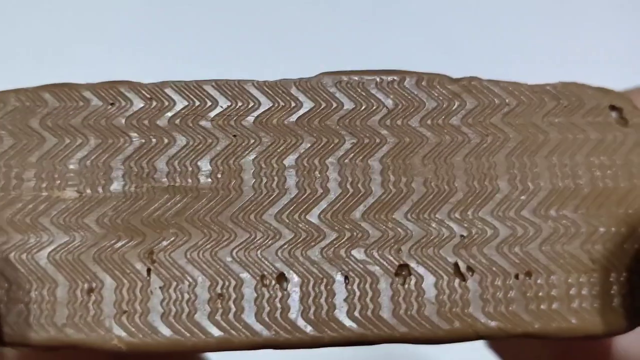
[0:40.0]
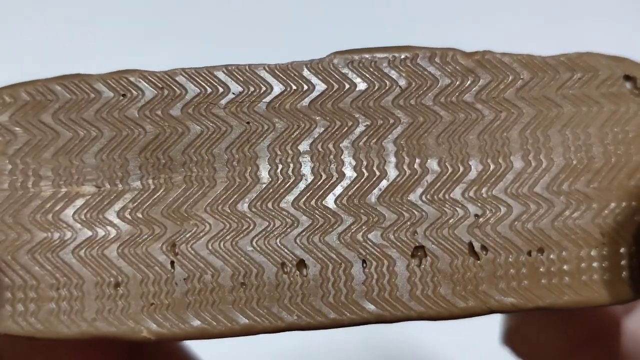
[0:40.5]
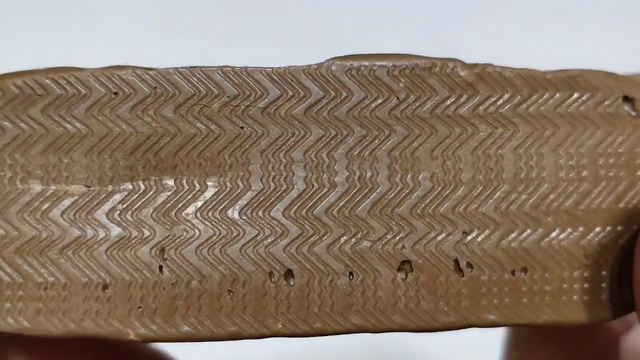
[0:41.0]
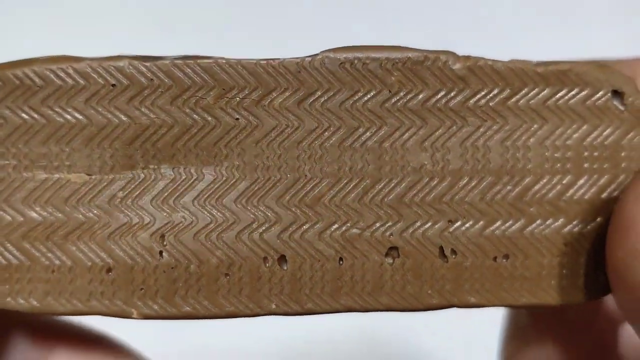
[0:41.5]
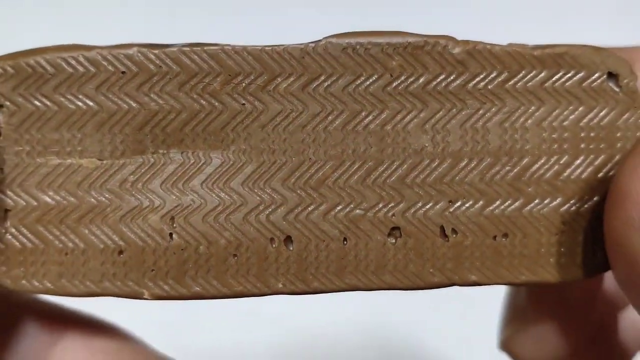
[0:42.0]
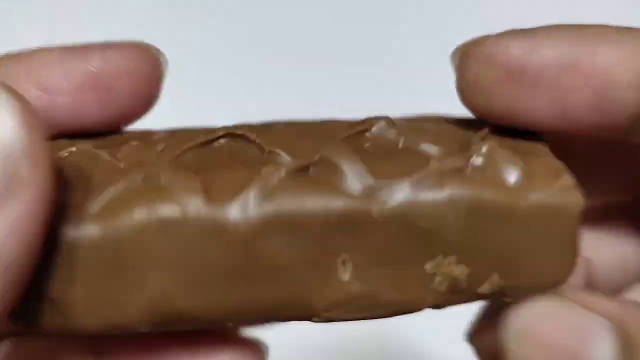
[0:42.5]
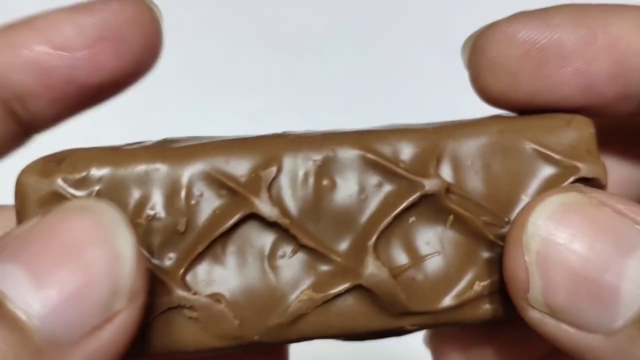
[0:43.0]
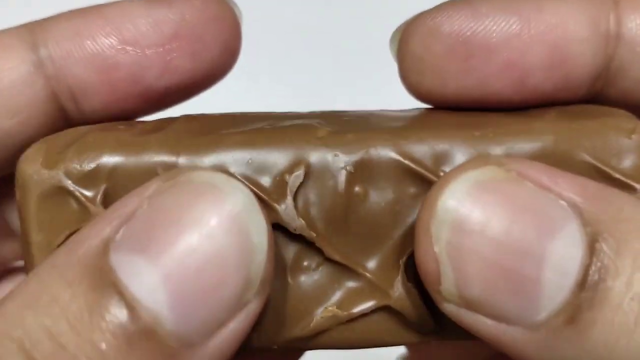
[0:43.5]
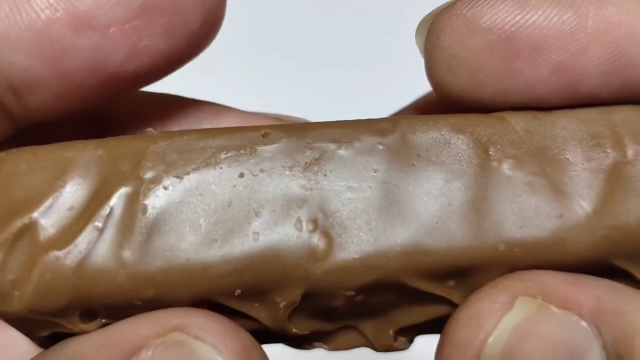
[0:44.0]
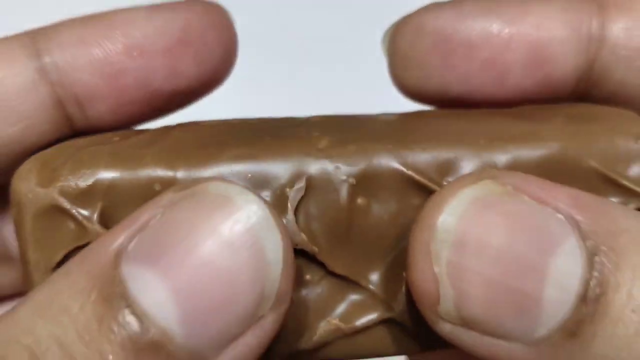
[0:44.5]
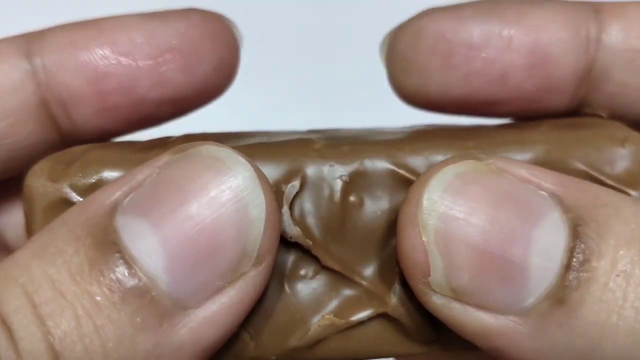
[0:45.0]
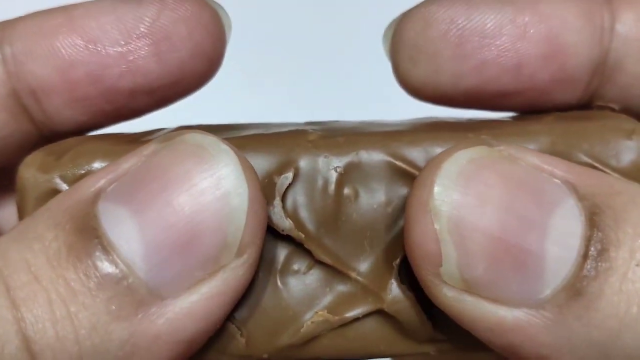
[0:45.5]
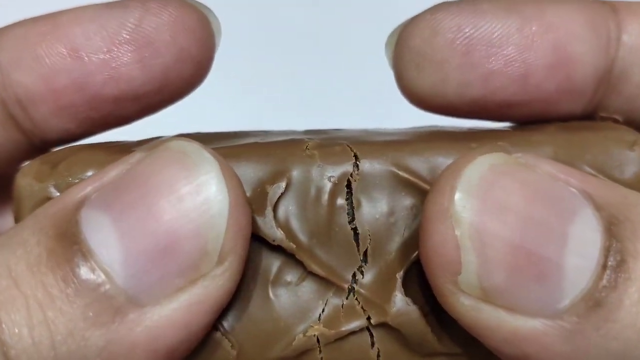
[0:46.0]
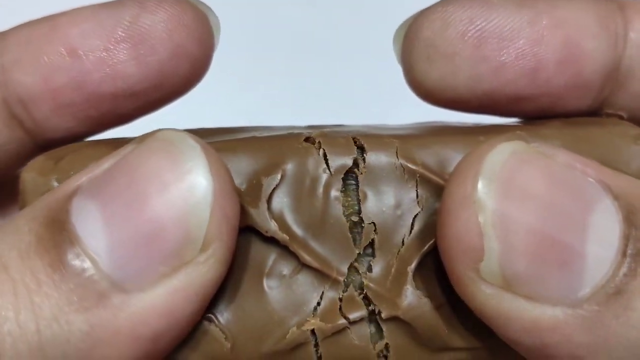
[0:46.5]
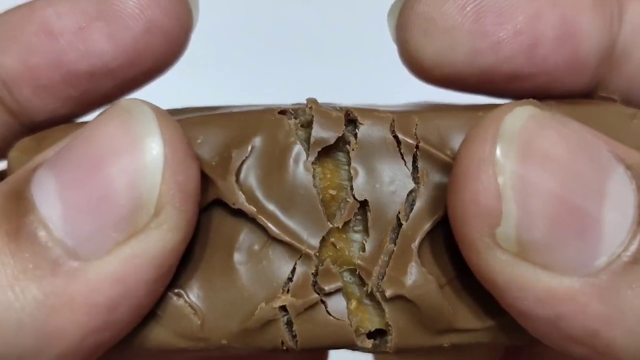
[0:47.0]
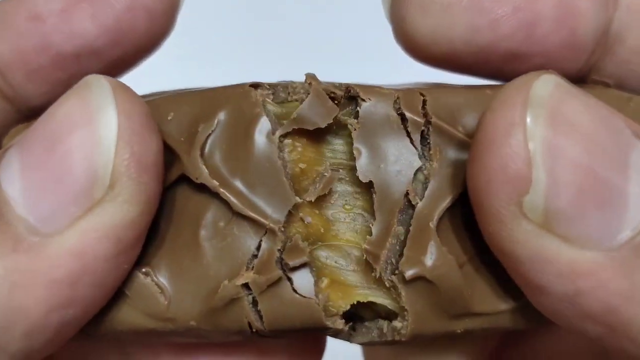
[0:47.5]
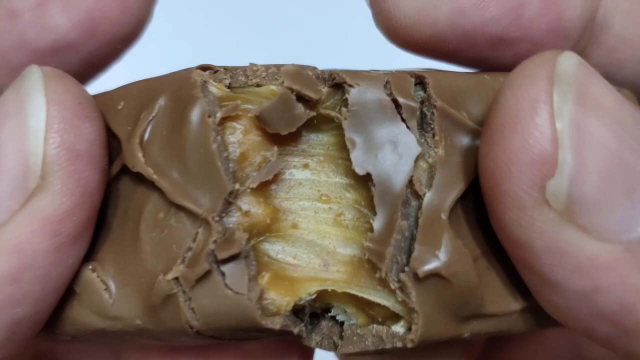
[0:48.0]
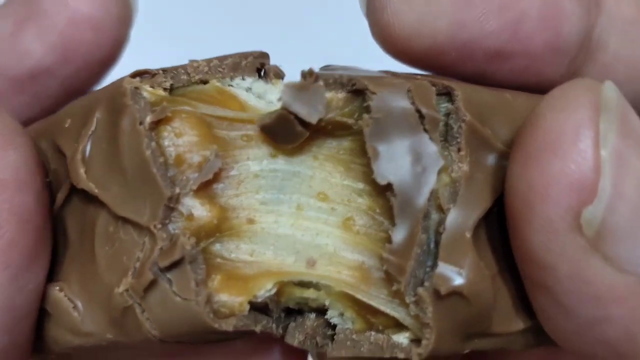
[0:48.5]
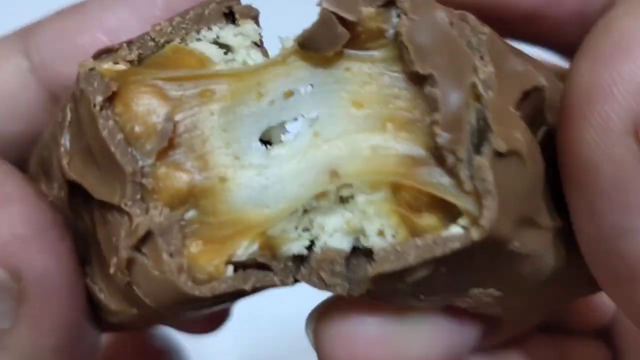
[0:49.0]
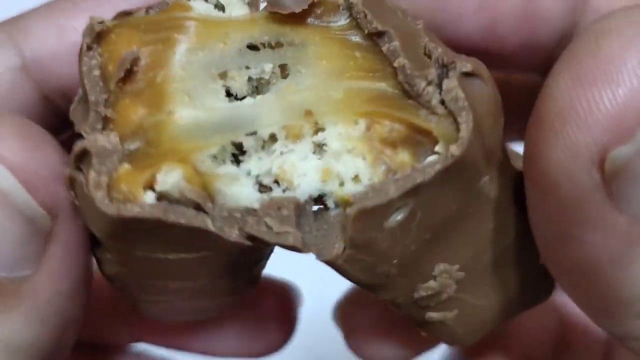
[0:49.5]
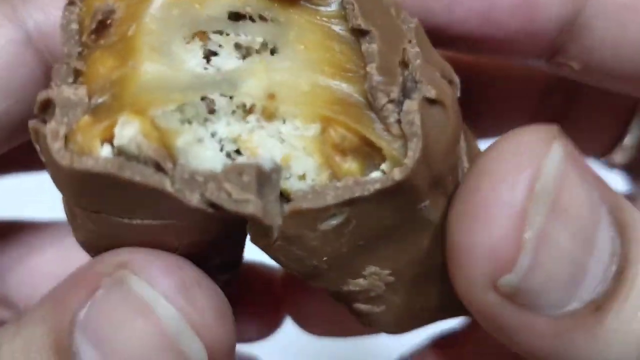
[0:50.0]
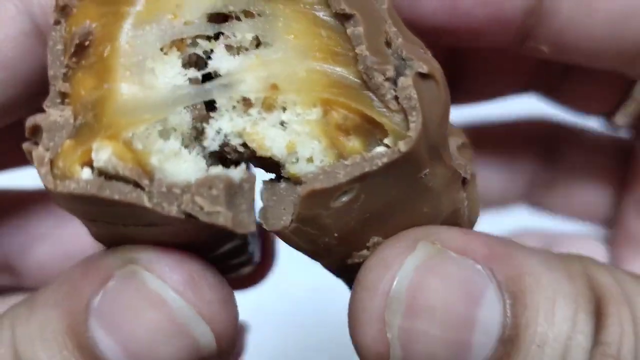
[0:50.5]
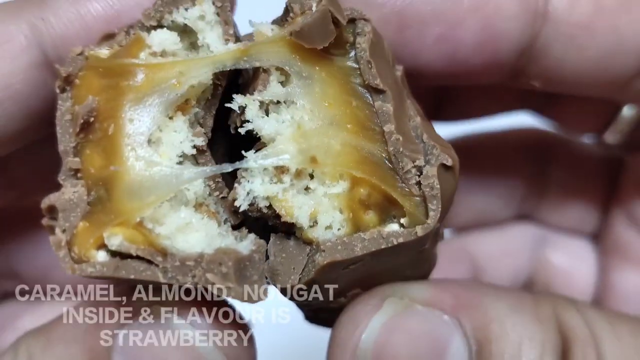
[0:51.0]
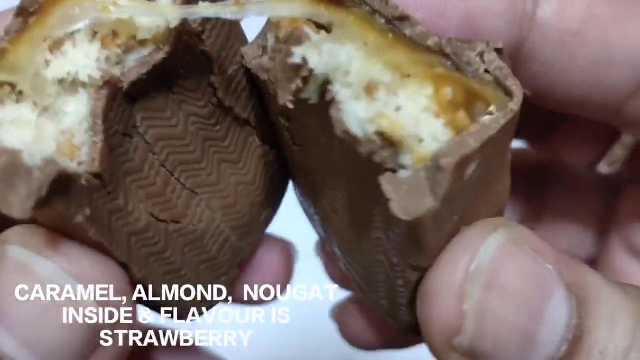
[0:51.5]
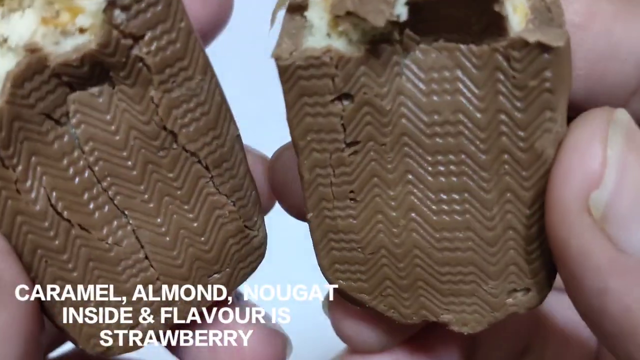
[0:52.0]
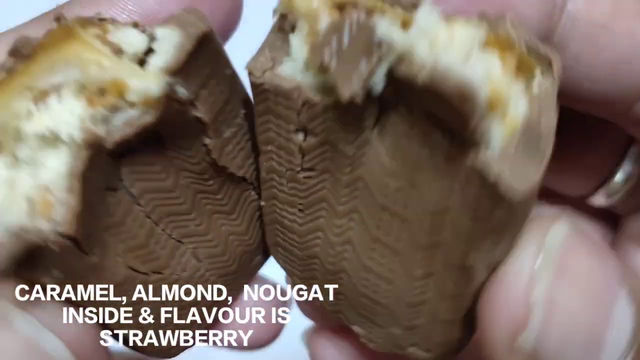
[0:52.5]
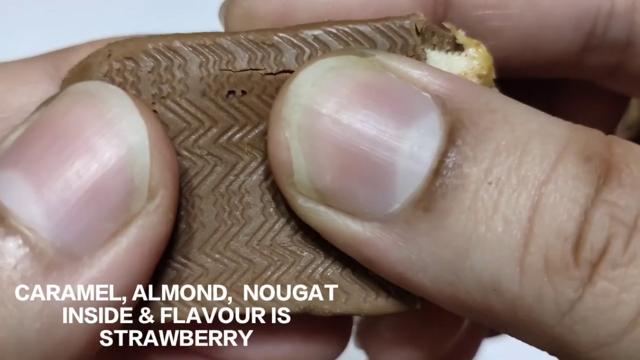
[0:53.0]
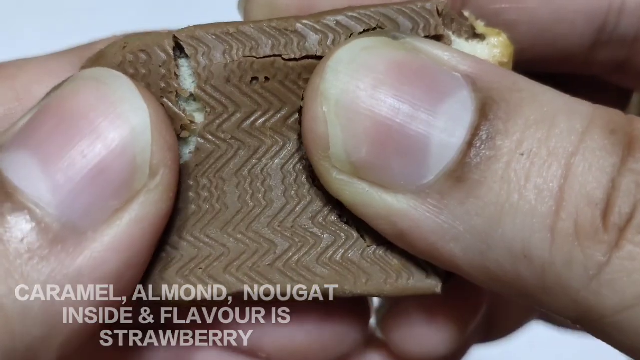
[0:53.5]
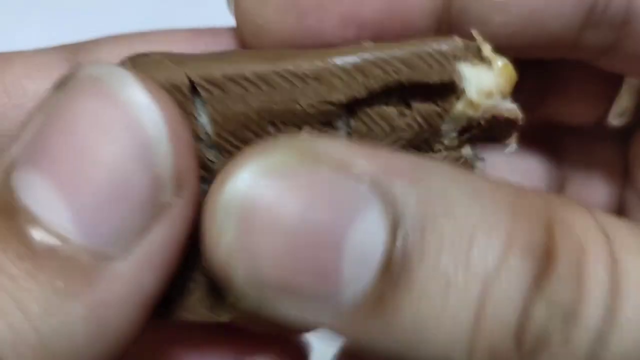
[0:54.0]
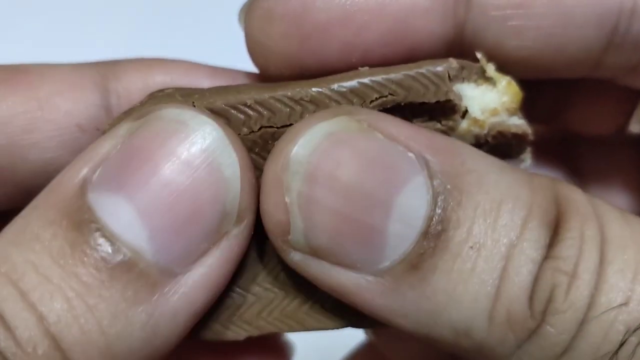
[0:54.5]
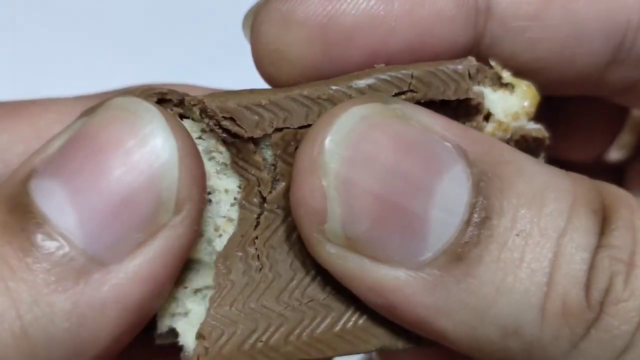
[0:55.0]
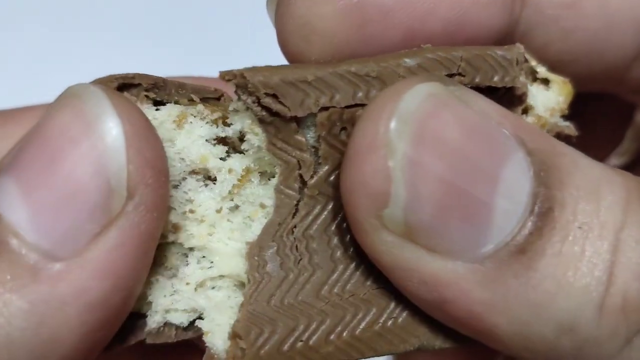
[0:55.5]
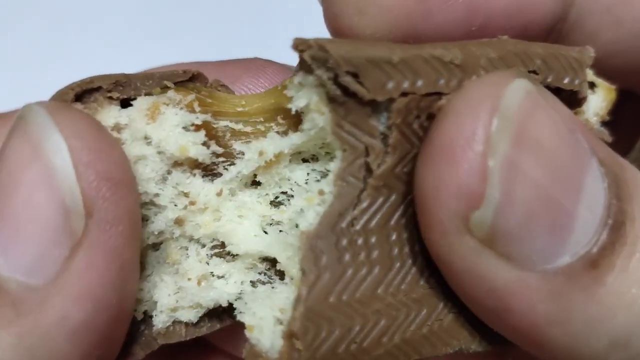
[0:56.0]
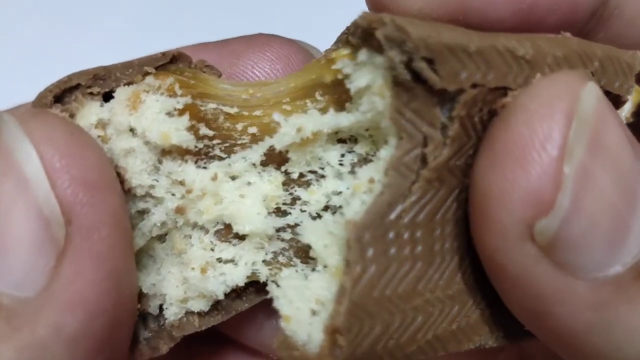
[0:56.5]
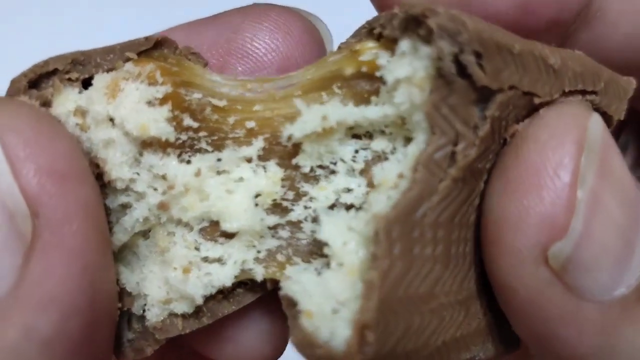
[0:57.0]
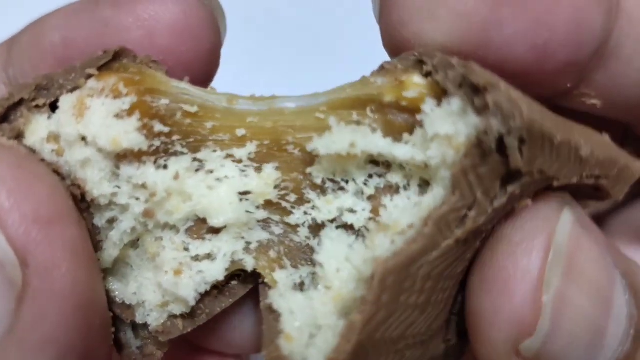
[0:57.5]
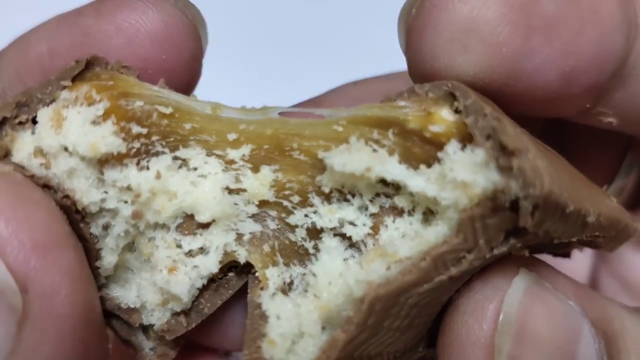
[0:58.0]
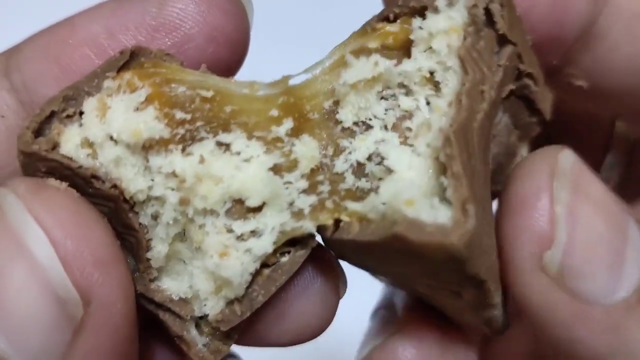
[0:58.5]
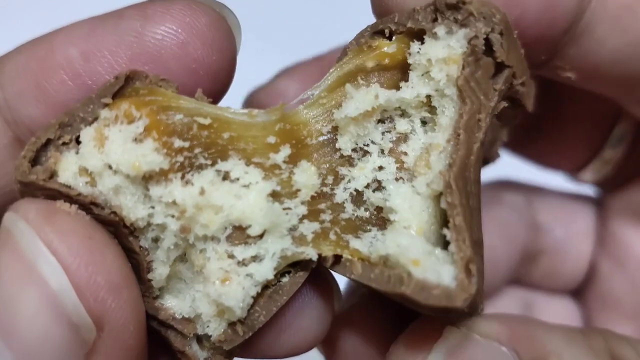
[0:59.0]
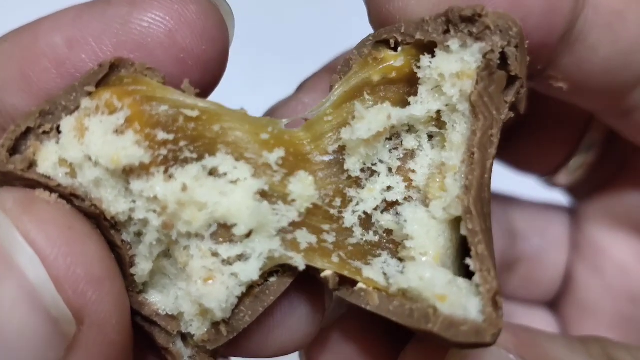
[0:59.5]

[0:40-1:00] A hand holds what looks like a Snickers bar, breaks it apart and shows the middle. First the bottom side is shown, with zigzag diagonal ridges underneath. The hand turns it over to show the top side, which has diagonal lines. Using the index finger and thumb, the hand breaks the bar in half down the middle, and the caramel sticks between the two pieces, forming what looks like a cross section. White text at the bottom left reads "caramel almond nougat inside and flavor is strawberry". The cross sections are put back together, showing white filling, some peanuts and caramel inside the chocolate casing. The scene then transitions to what looks like one half of the bar, and the fingers break apart its edge, revealing what looks like a lot of white flakes followed by sticky caramel, pulling it apart to show the cross section.